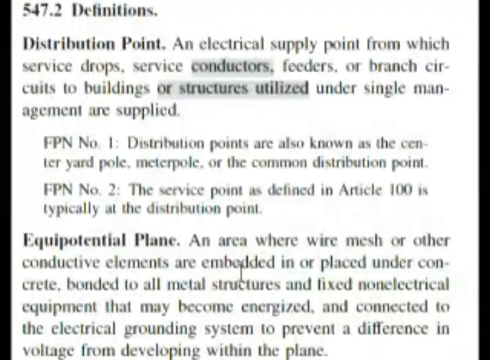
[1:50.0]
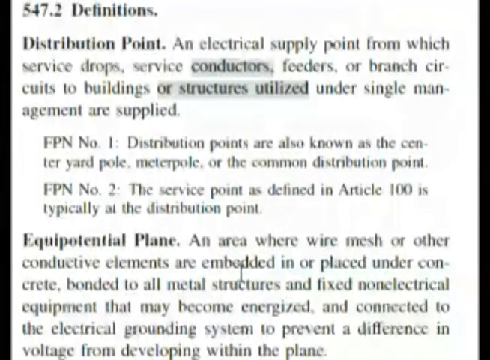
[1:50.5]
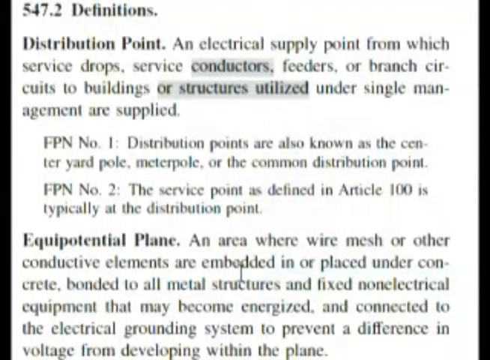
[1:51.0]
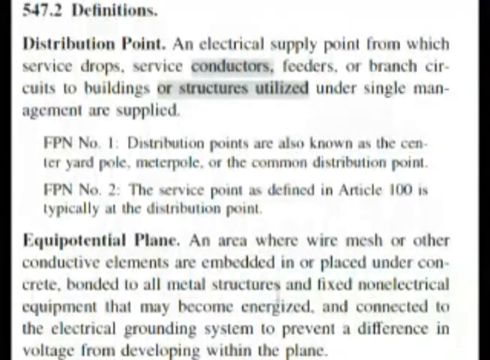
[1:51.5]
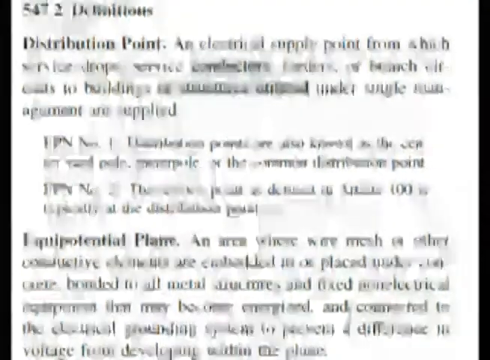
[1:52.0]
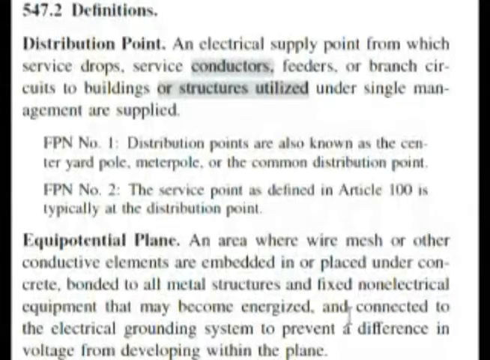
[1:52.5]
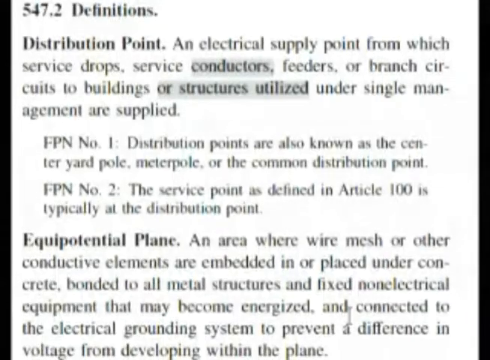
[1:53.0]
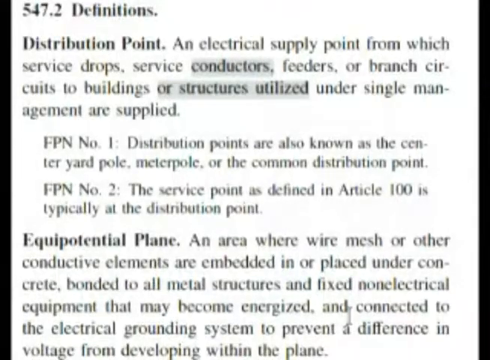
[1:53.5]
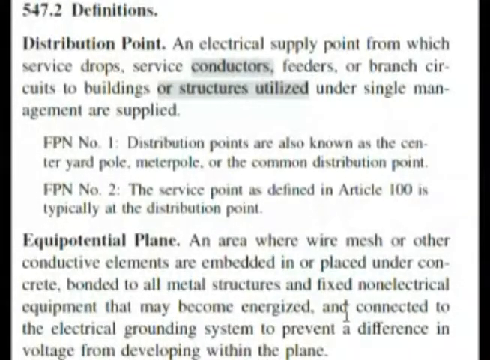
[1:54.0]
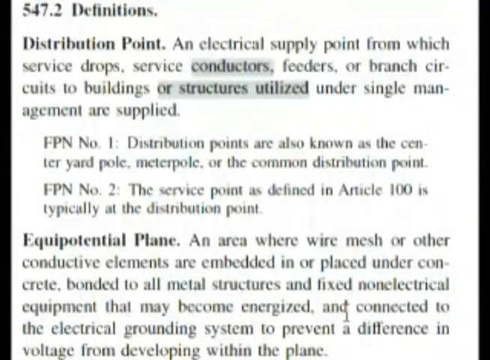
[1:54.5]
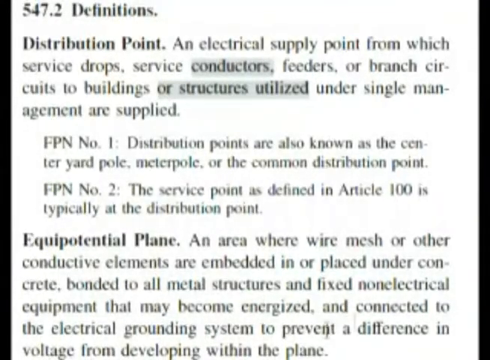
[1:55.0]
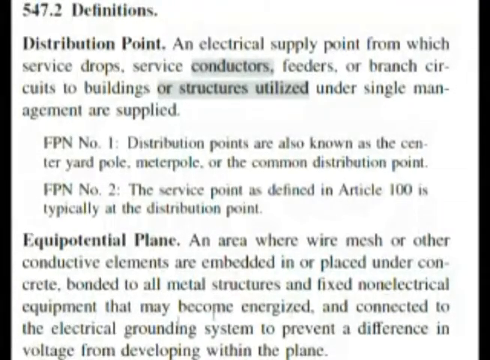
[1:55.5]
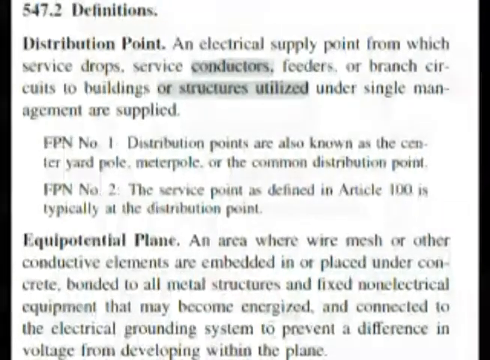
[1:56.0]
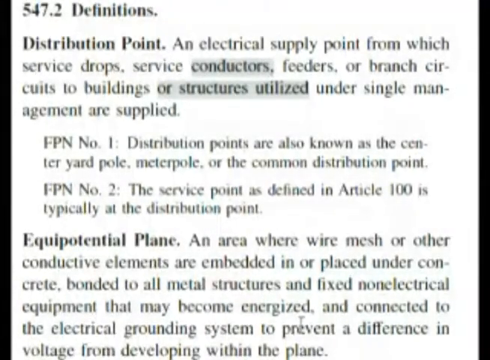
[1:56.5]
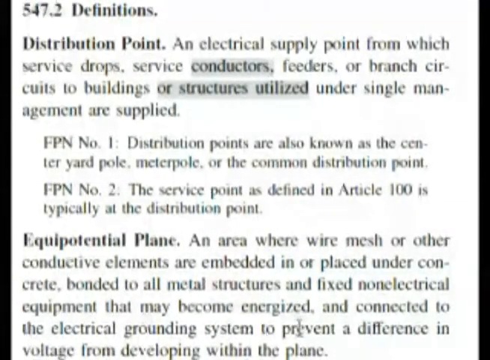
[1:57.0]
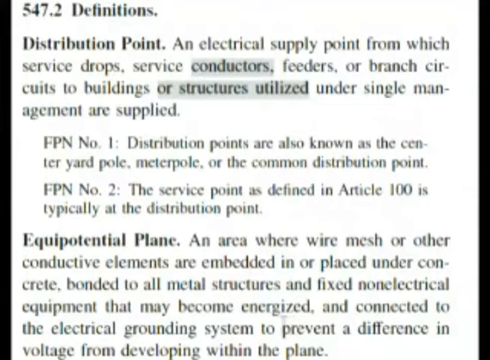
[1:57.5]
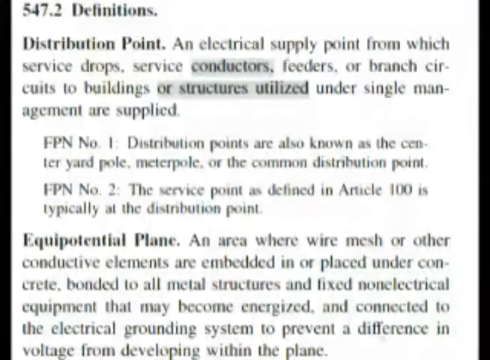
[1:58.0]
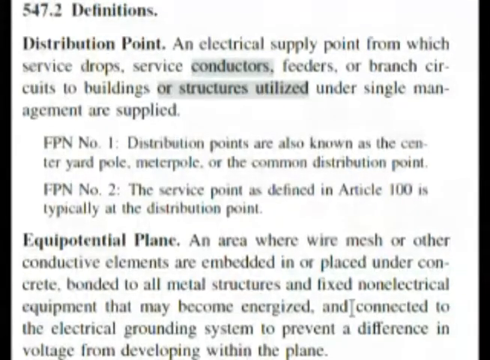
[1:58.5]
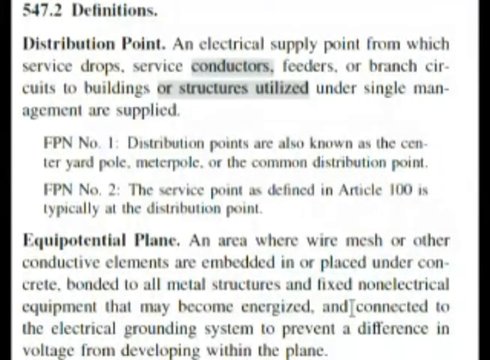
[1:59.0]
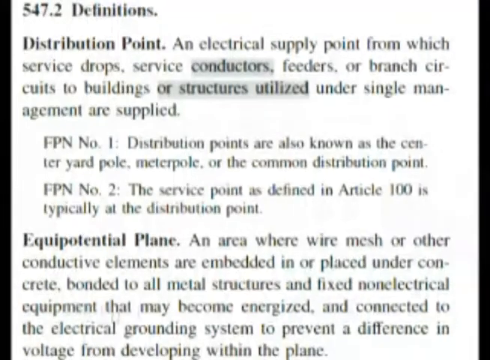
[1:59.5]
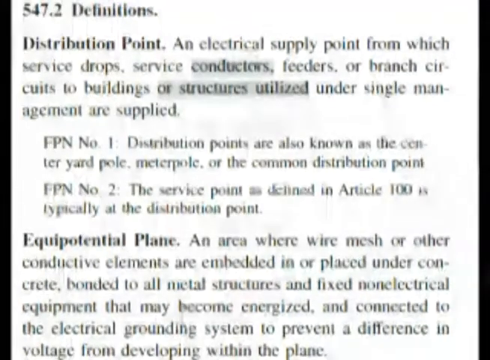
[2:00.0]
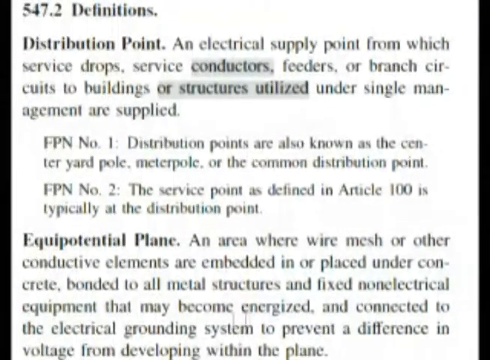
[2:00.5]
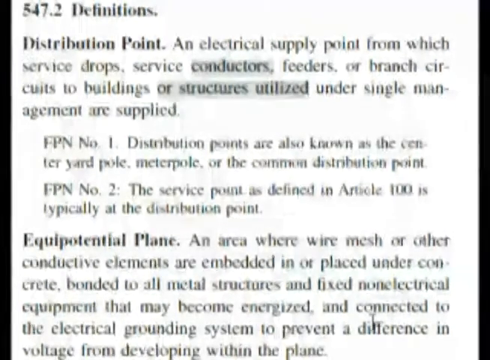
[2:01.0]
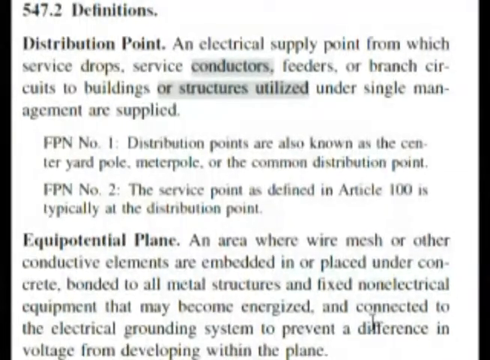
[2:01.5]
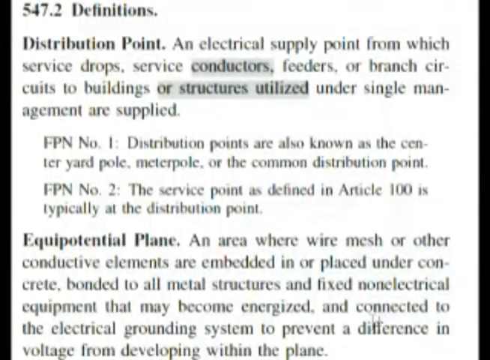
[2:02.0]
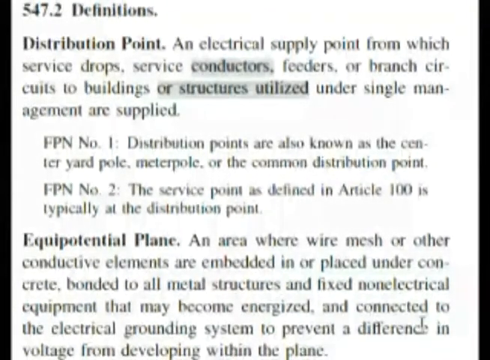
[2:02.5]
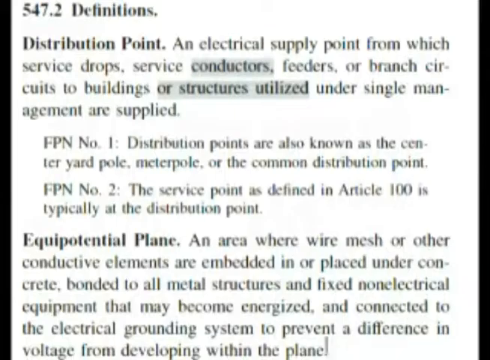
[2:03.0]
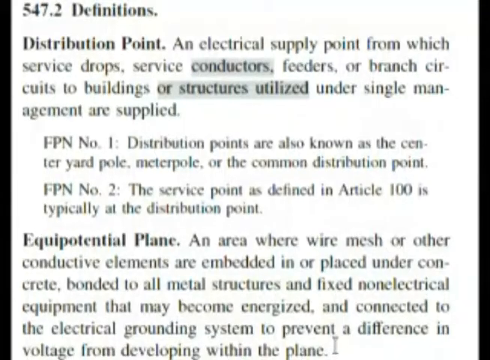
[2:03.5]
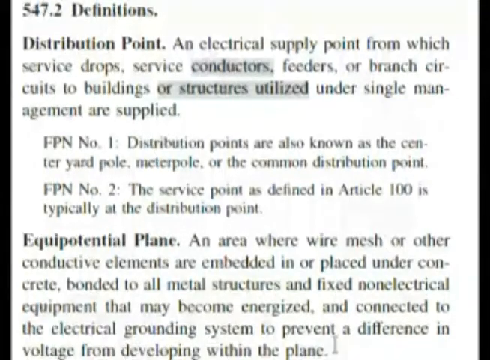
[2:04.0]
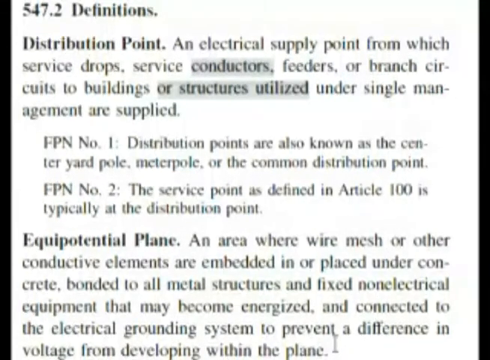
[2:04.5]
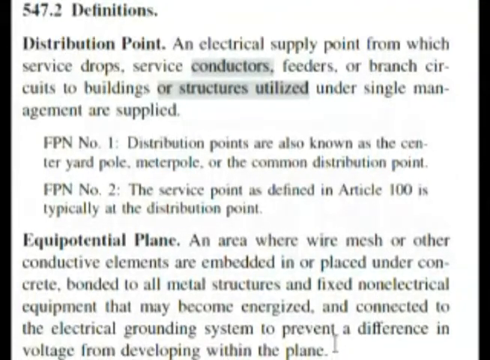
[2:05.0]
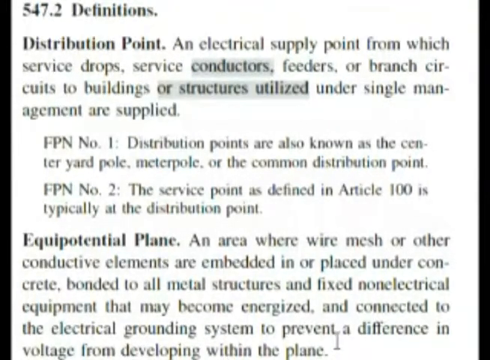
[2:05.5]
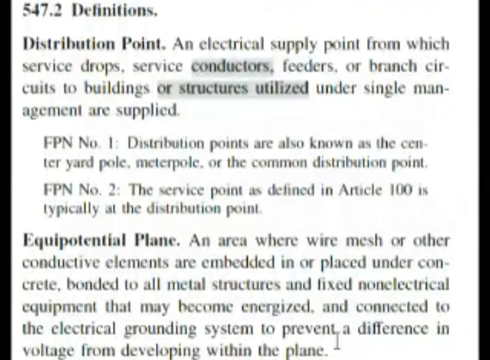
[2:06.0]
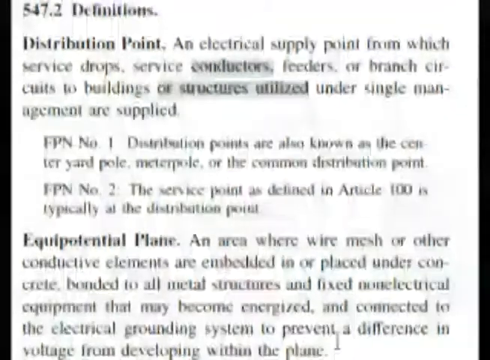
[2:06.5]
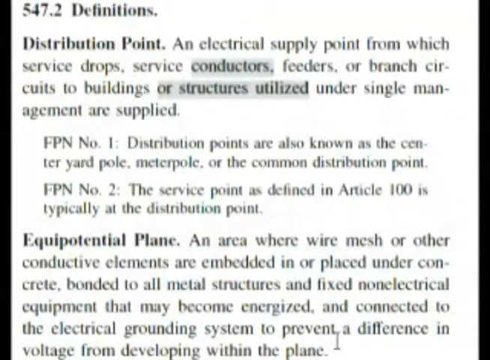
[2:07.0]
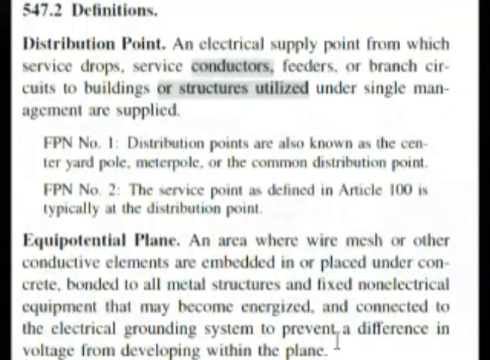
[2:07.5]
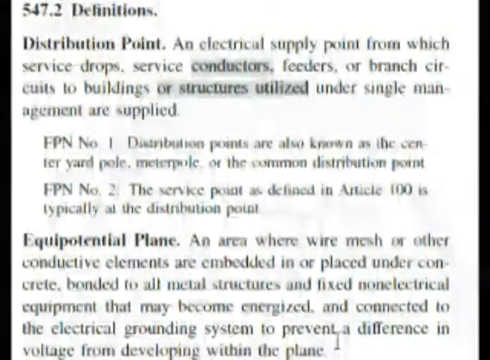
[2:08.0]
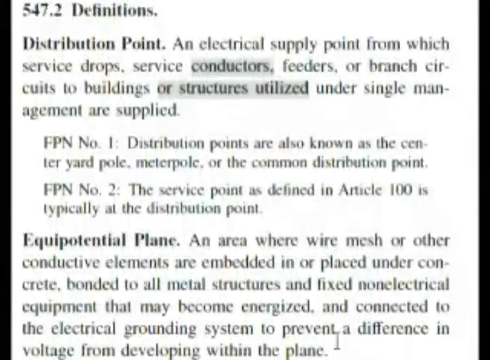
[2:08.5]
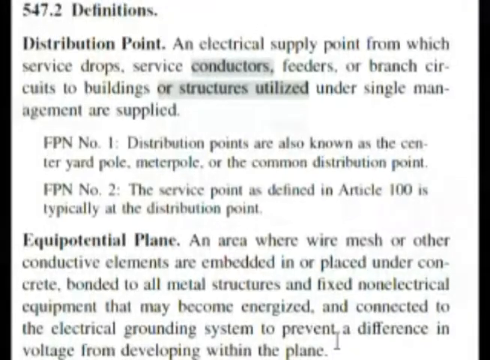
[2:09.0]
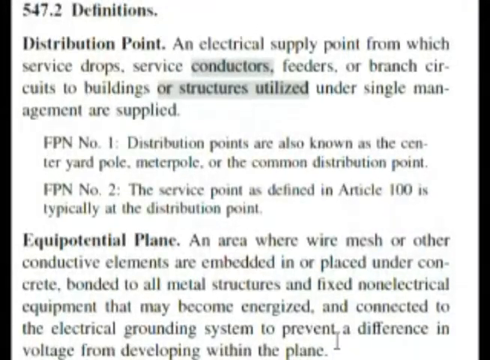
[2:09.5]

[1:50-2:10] The definition page stays on screen with nothing new, while the cursor moves around. The text reads: "547.2 definitions, distribution point, an electrical supply point from which service drops, service conductors, feeders, or branch circuits to buildings or structures utilized under single management are supplied. FPN number one, distribution points are also known as the center yard pole, meter pole, or the common distribution point. FPN number two, the service point as defined in Article 100 is typically at the distribution point. Equipotential plane, an area where wire mesh or other conductive elements are embedded in or placed under concrete, bonded to all metal structures and fixed non-electrical equipment that may become energized and connected to the electrical grounding system to prevent a difference in voltage from developing within the plane."